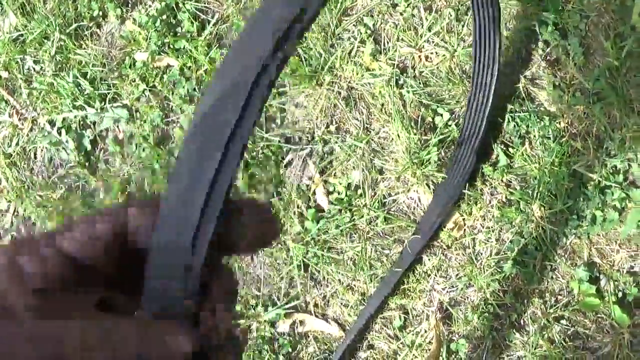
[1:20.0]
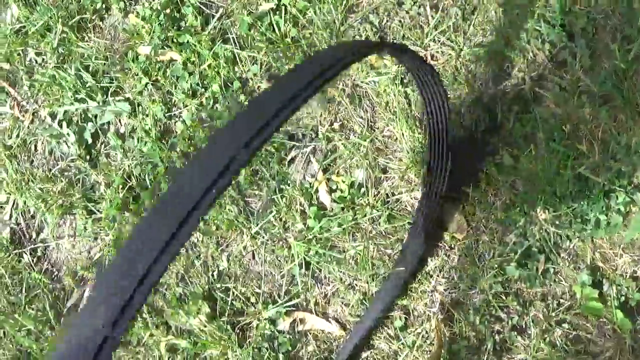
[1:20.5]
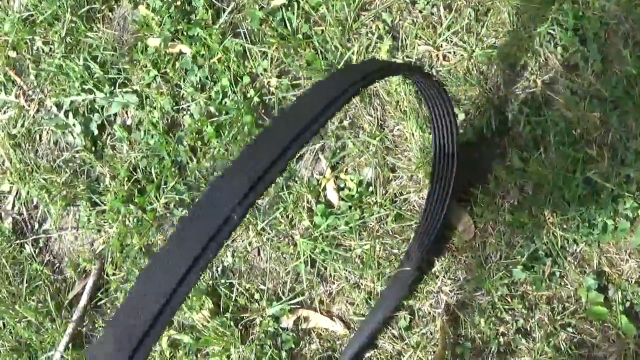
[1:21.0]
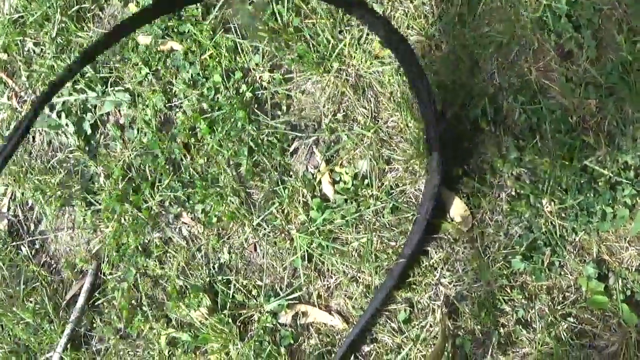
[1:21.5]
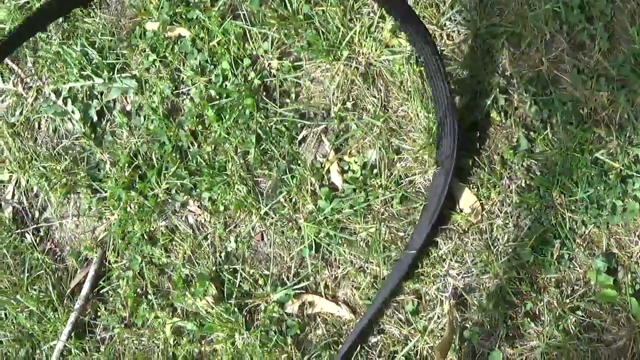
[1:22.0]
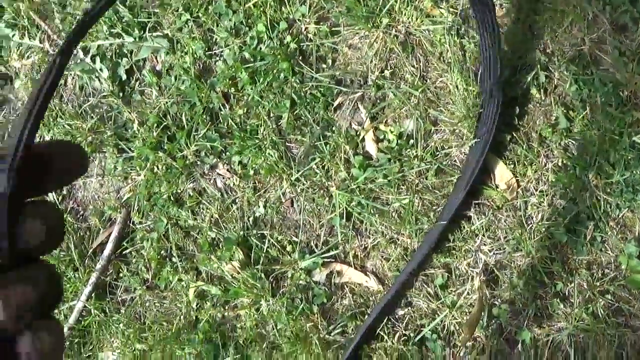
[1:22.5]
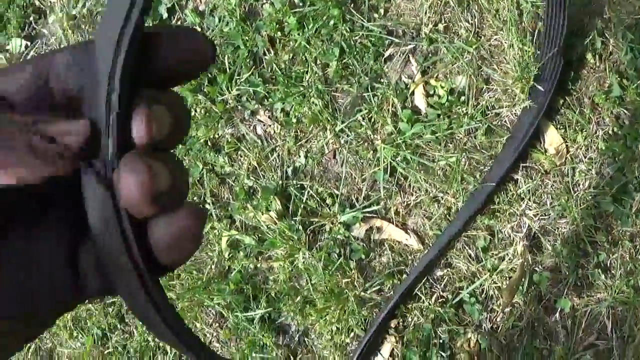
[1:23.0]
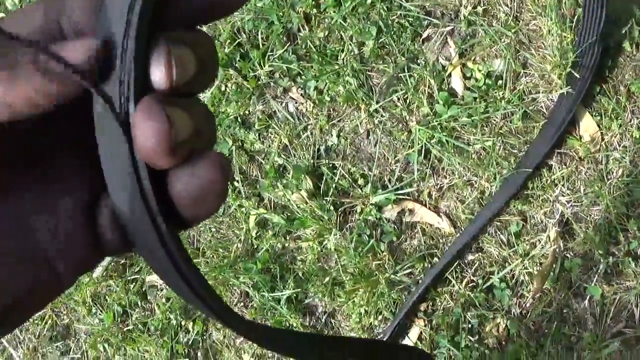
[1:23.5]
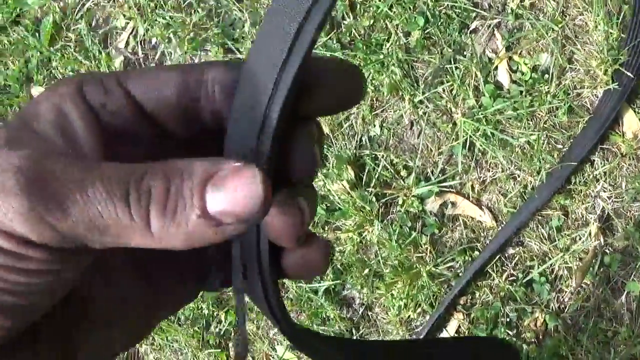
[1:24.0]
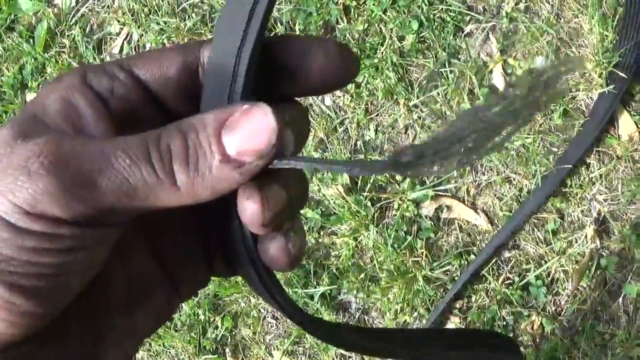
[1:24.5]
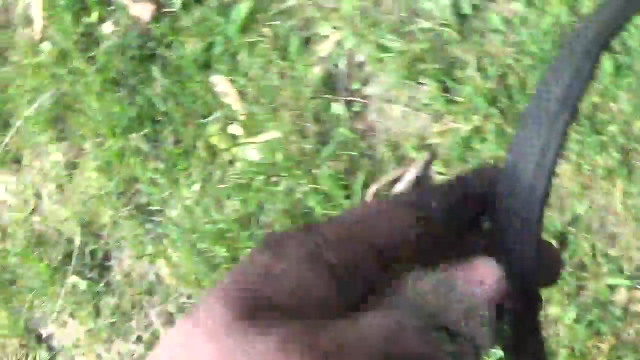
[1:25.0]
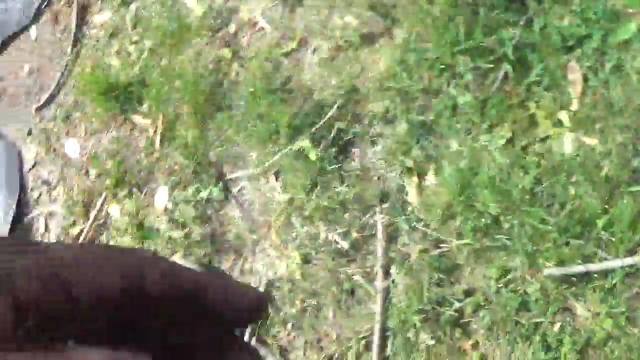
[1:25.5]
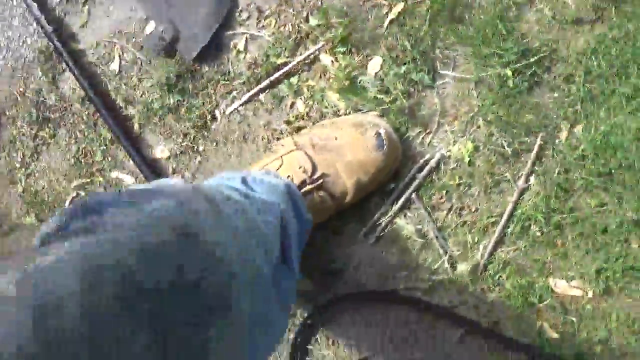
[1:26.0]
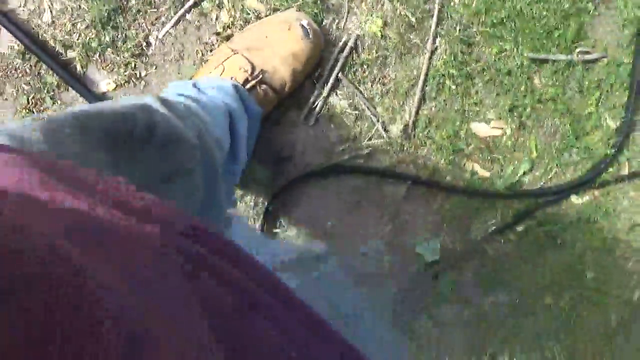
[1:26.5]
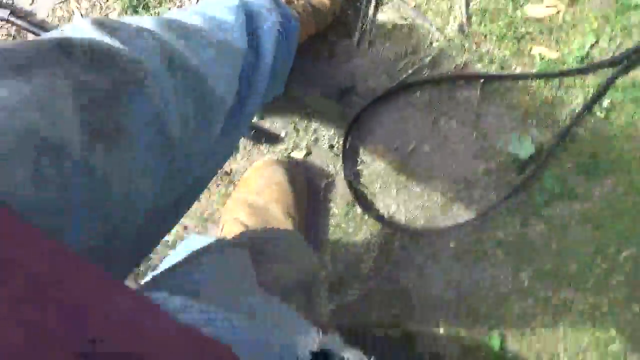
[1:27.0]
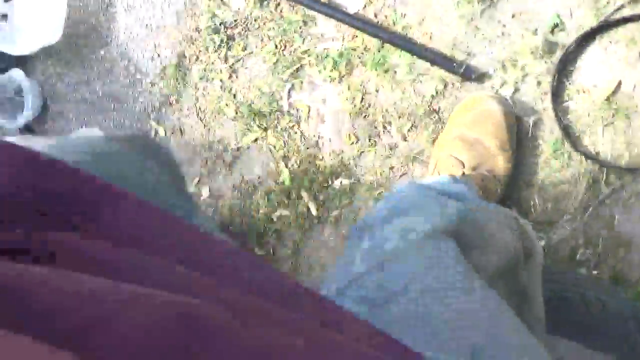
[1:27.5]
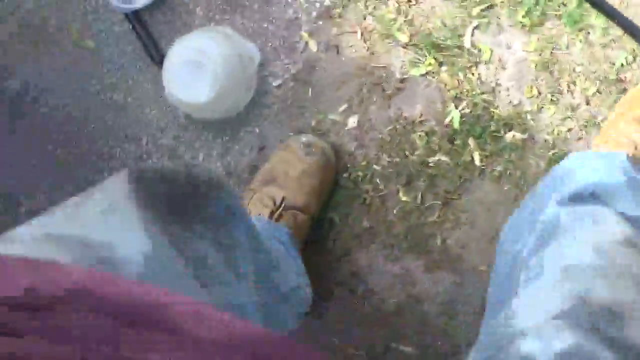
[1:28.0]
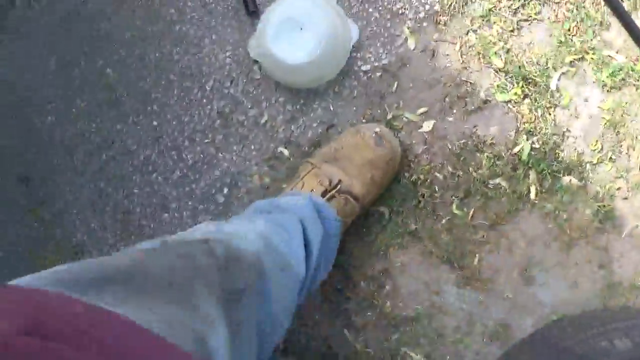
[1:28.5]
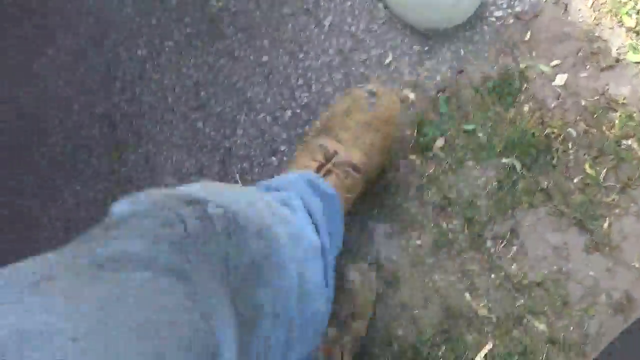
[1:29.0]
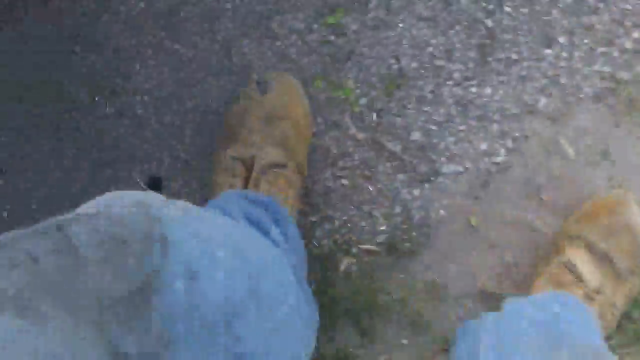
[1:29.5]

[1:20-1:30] A greasy left hand holds a worn and damaged belt, and the thumb of that hand points to the damaged edge of the belt. The video then pans out to show the individual's work boots and blue jeans as he appears to step back towards the vehicle. The individual seems to be wearing a burgundy shirt as well.